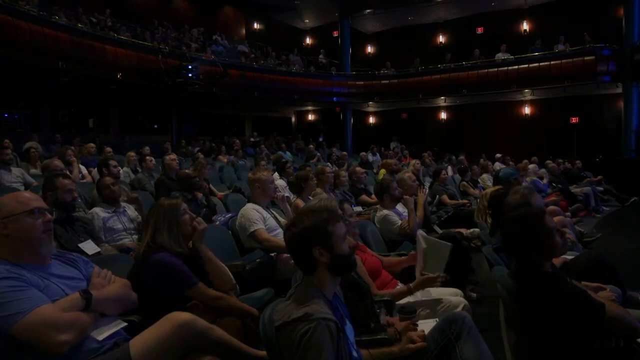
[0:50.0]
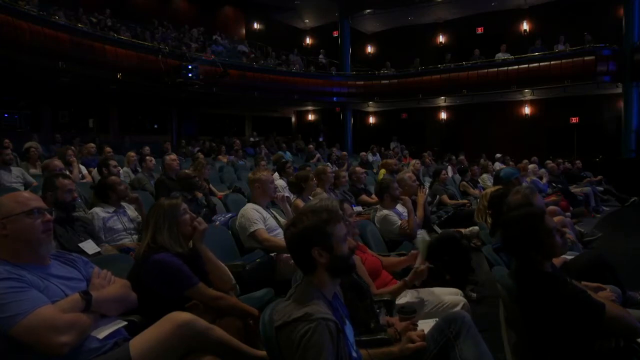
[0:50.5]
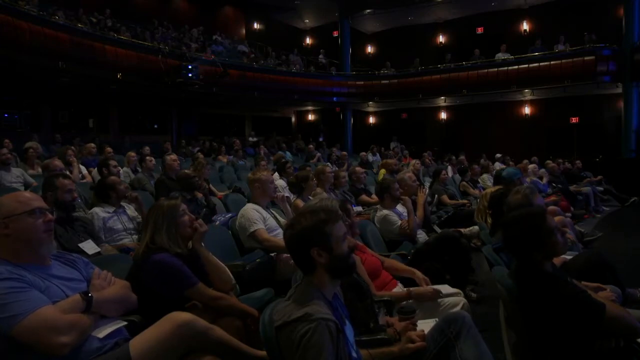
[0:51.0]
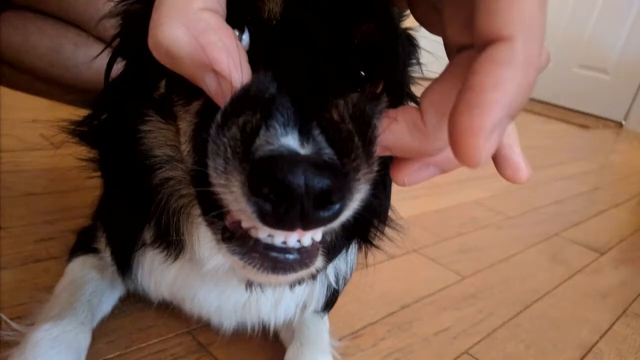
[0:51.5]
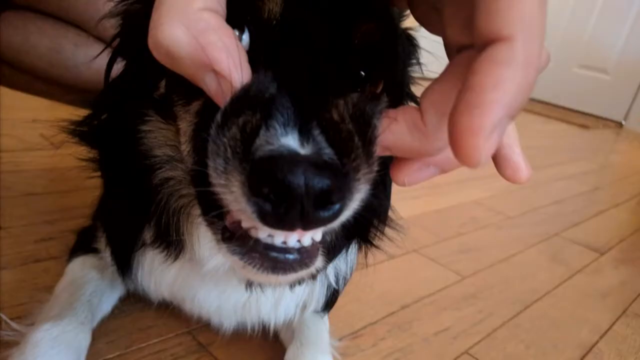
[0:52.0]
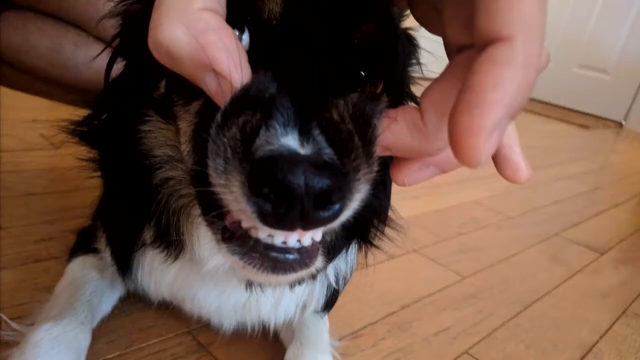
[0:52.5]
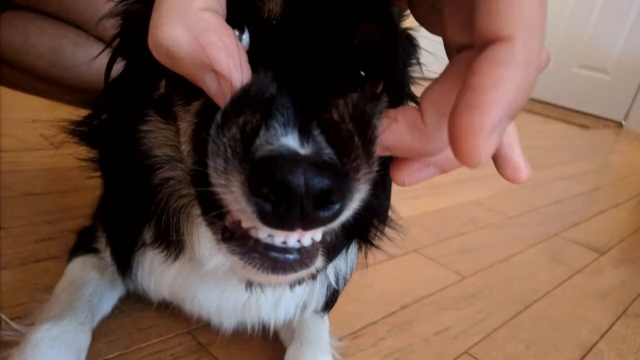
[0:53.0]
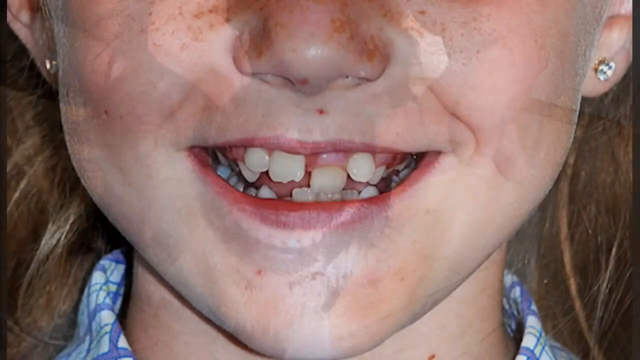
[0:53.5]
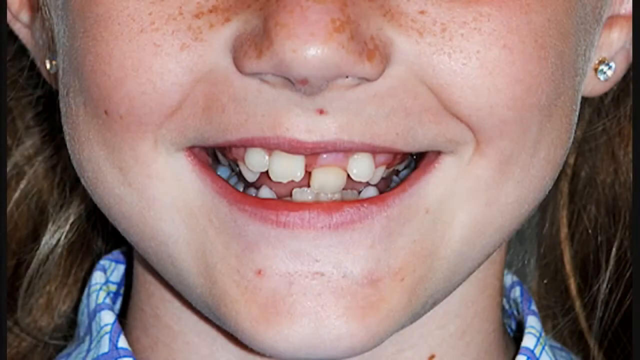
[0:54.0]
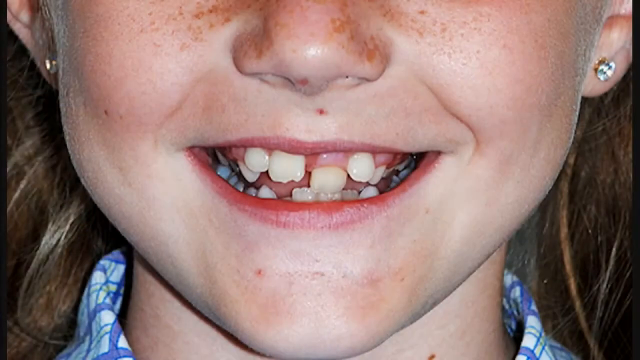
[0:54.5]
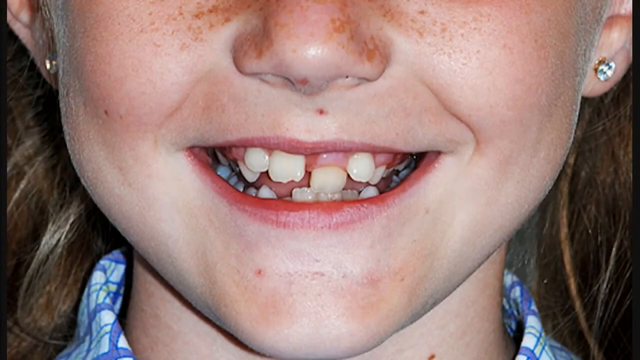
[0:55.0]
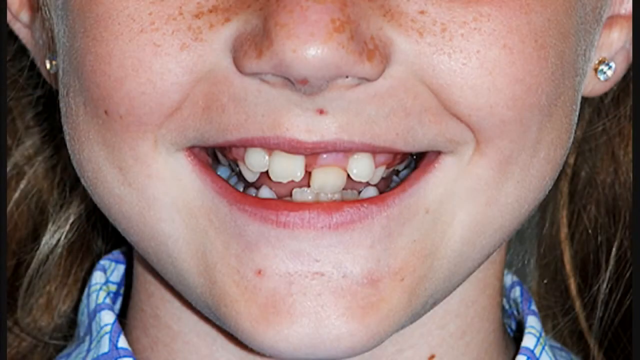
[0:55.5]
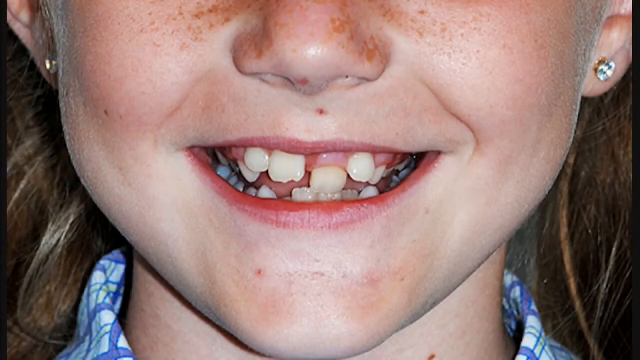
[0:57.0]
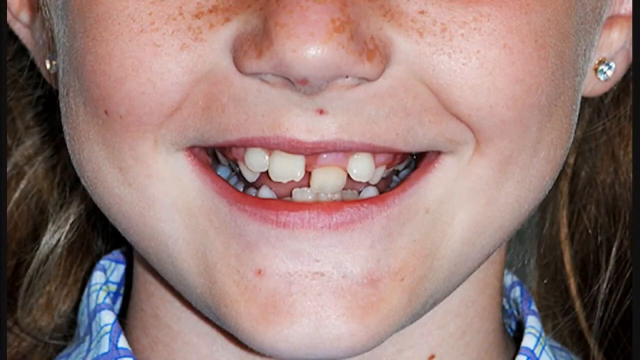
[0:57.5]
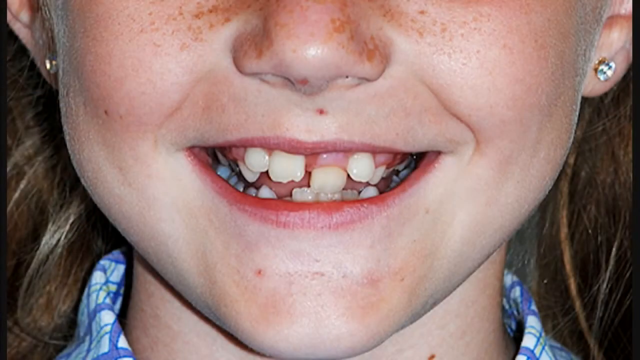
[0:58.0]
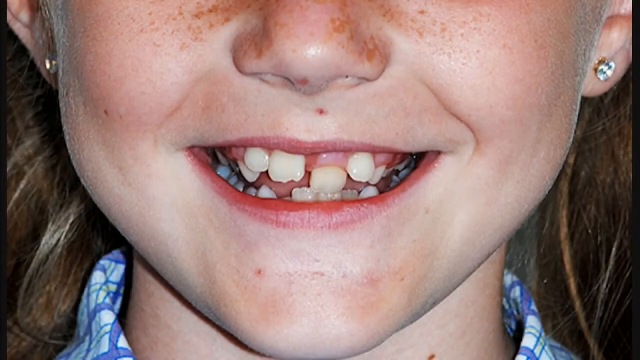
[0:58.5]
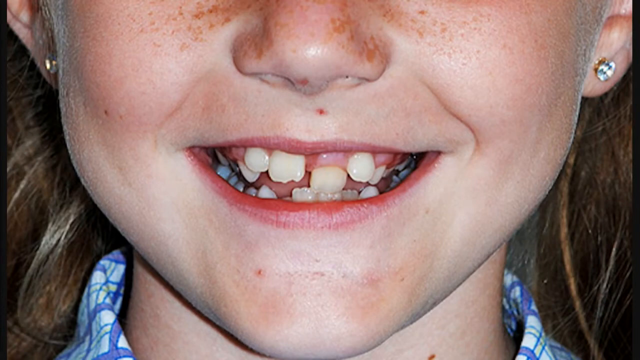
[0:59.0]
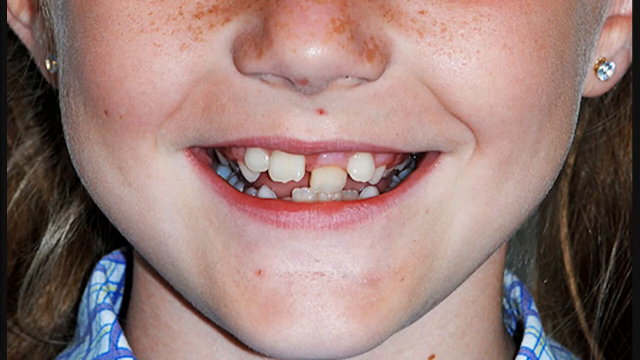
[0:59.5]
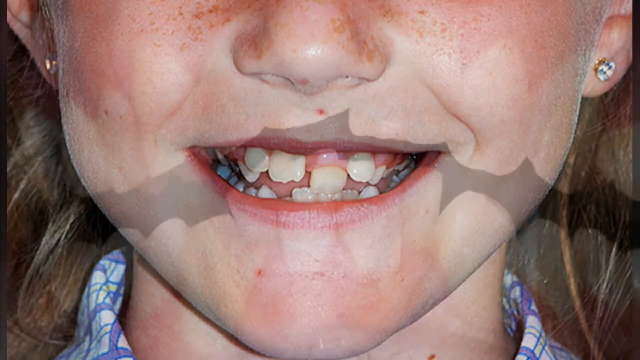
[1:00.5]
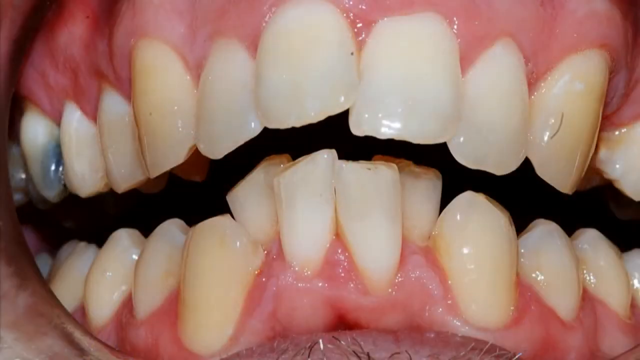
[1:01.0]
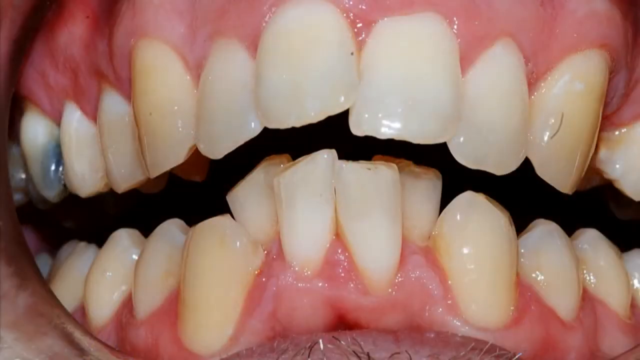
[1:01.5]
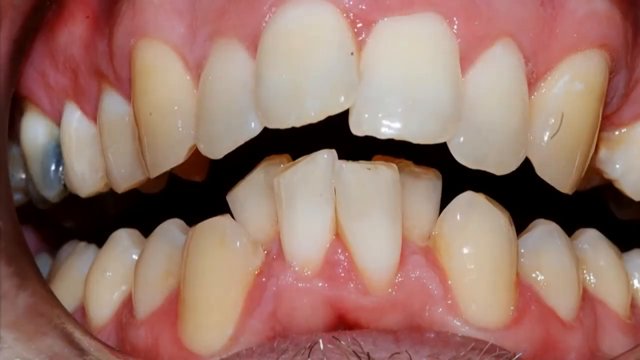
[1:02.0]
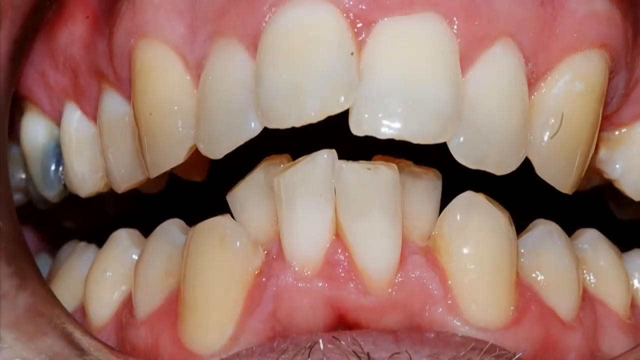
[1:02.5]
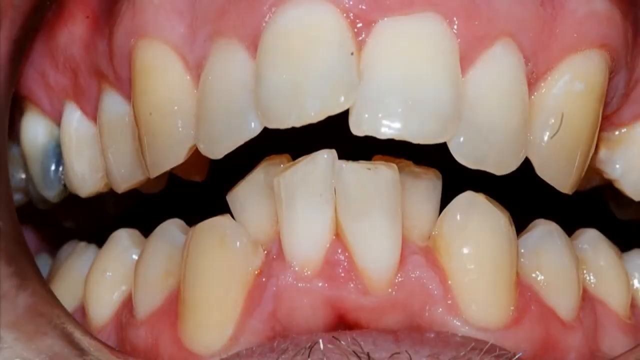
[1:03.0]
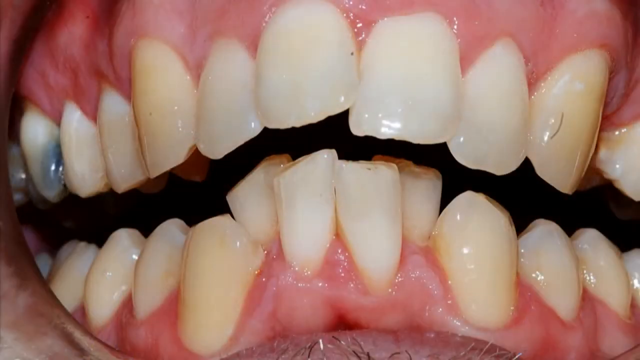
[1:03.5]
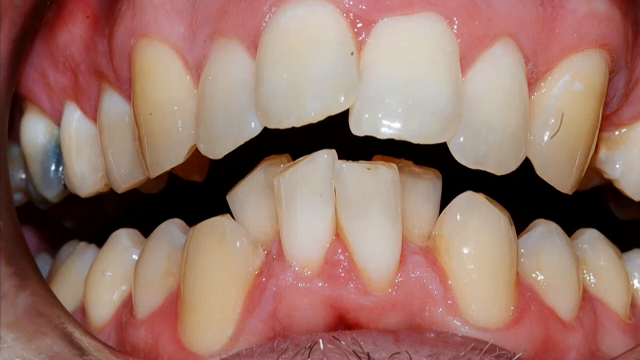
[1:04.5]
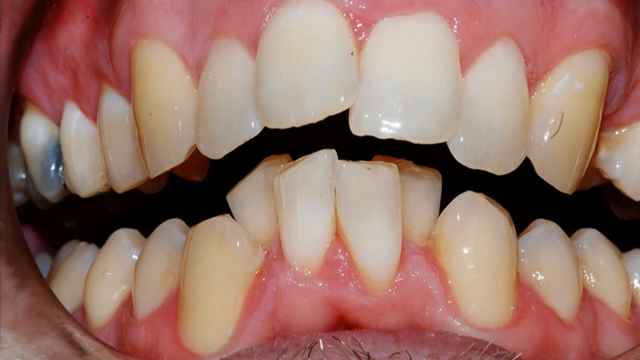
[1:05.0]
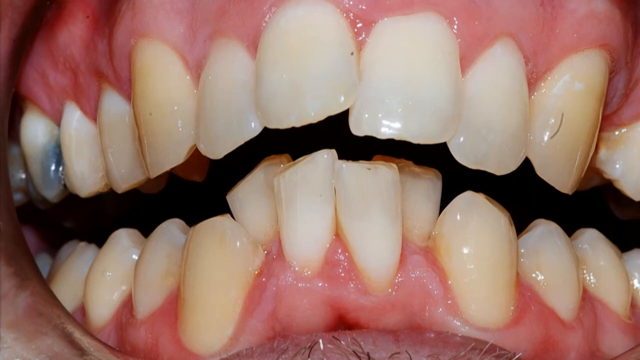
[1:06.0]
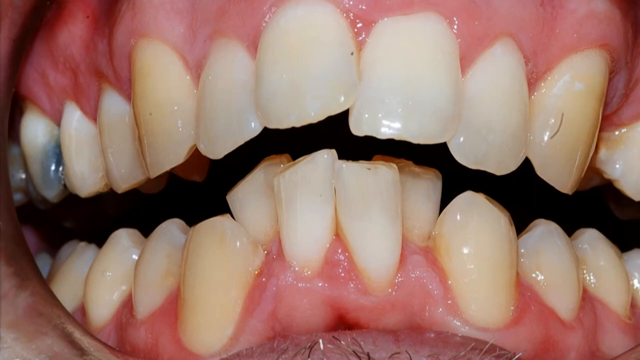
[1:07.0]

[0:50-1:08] People sit in green seats in a darkened auditorium that has two levels, looking up and to the right. The video switches to an image of a person holding the sides of a dog's head with their thumb and middle finger and pulling its lips up. The dog is black and white and faces the viewer and the camera. The video switches to a picture of a child's face, showing only the bottom half beneath the eyes and above the neck or shoulders. The child has misshapen teeth and smiles at the viewer. The child has an earring in each ear, long brown or red hair, and freckles, and wears a plaid blue and white shirt. The video then switches to an image of misshapen teeth. A person's lip is visible on the left side of the frame, and in the middle, the teeth are misshapen, especially toward the center of the gums where the teeth are bunched together.